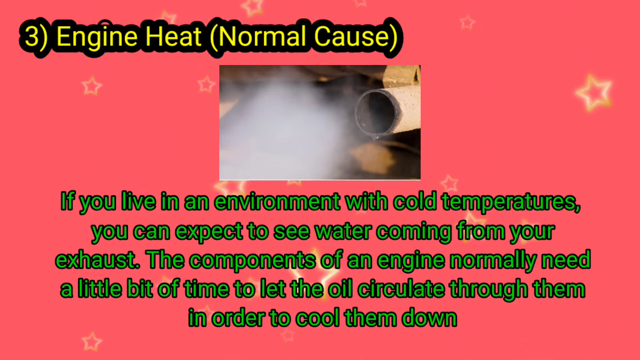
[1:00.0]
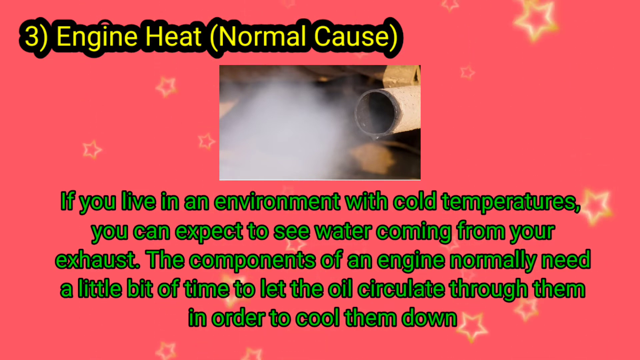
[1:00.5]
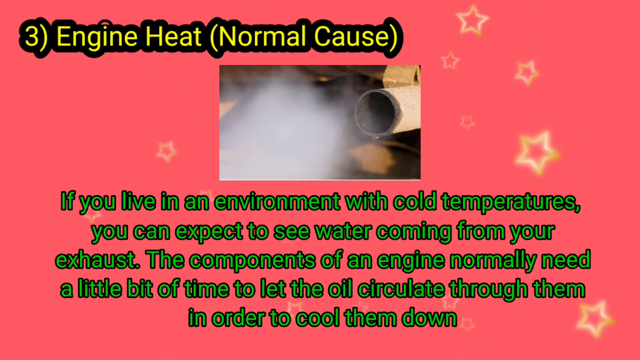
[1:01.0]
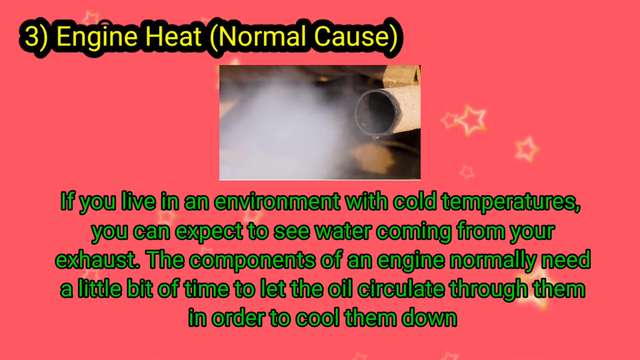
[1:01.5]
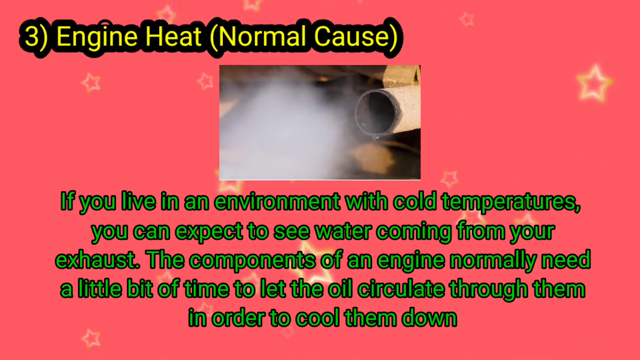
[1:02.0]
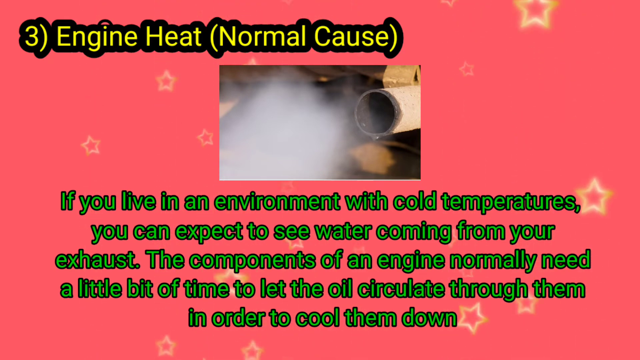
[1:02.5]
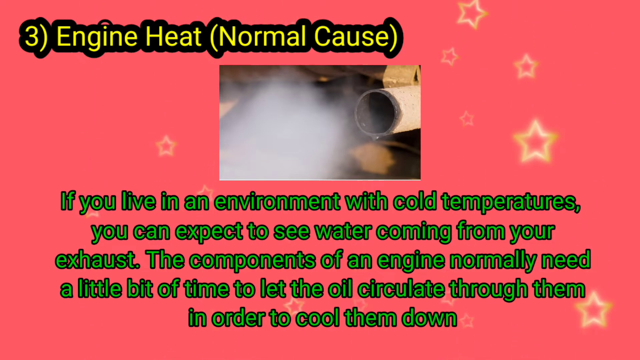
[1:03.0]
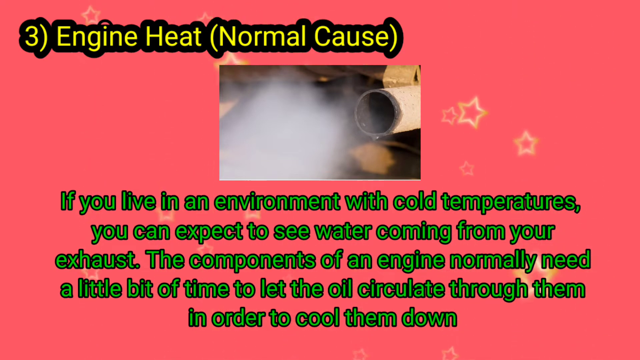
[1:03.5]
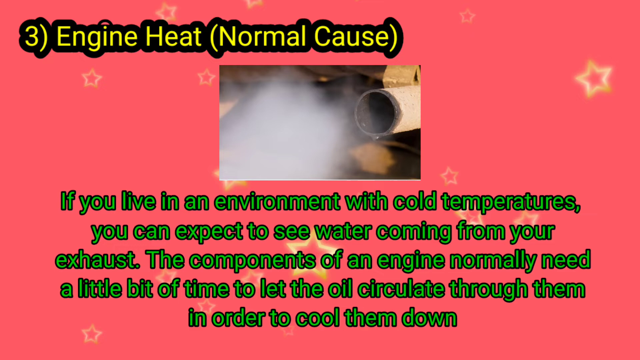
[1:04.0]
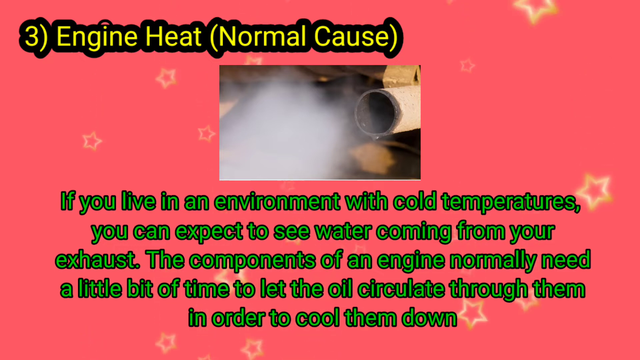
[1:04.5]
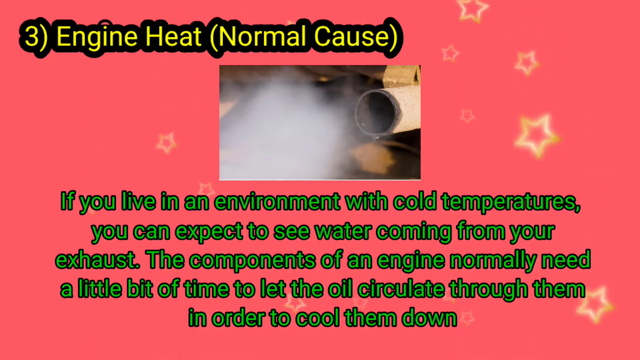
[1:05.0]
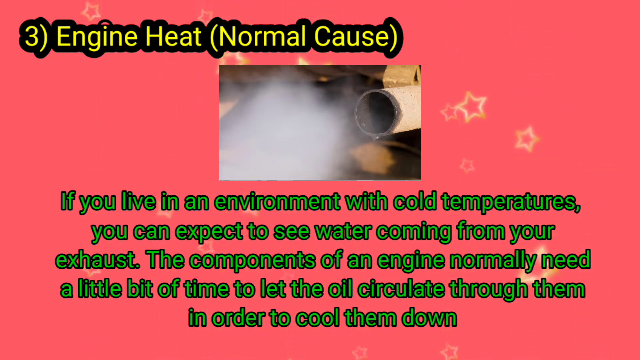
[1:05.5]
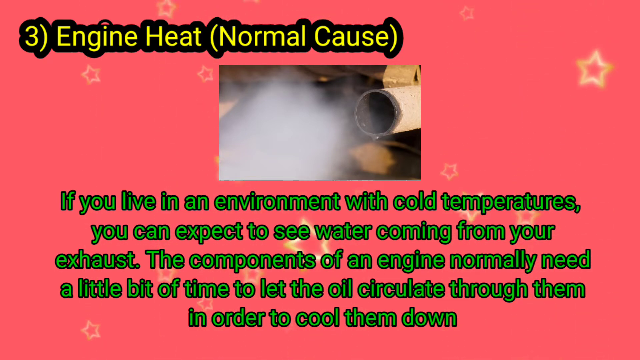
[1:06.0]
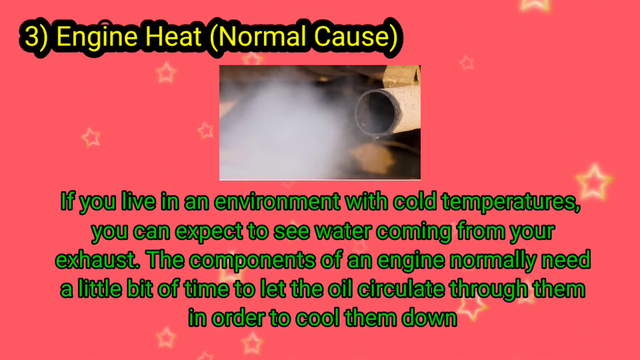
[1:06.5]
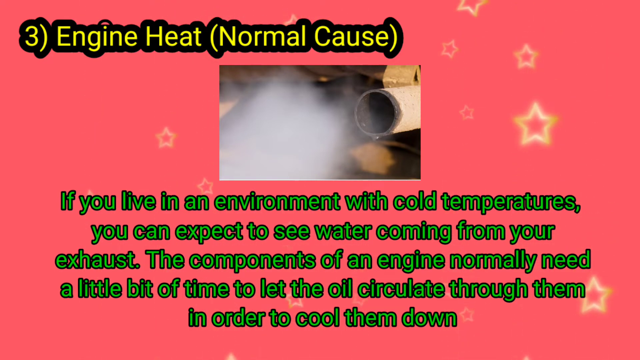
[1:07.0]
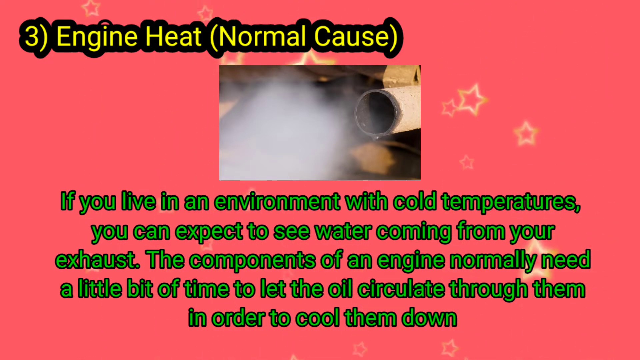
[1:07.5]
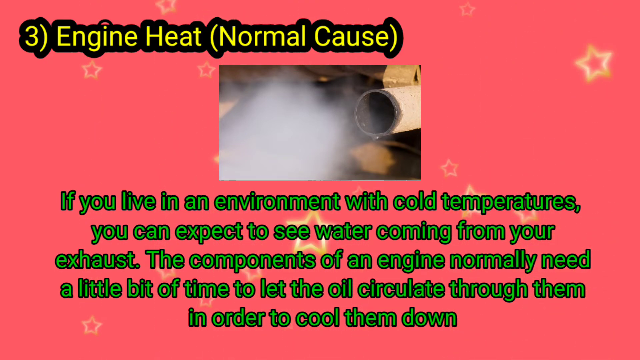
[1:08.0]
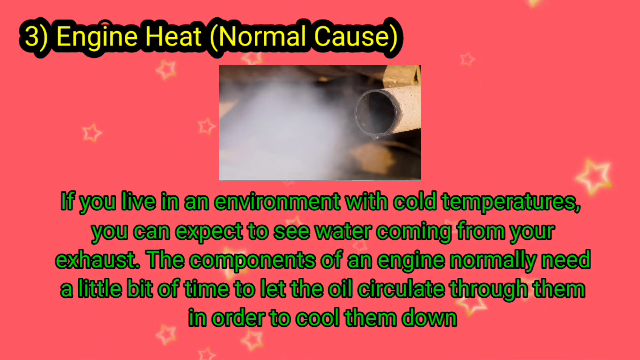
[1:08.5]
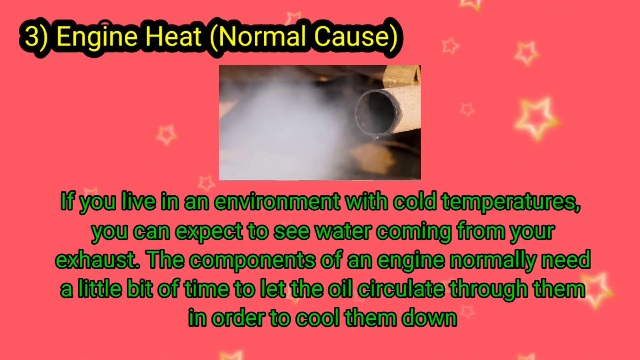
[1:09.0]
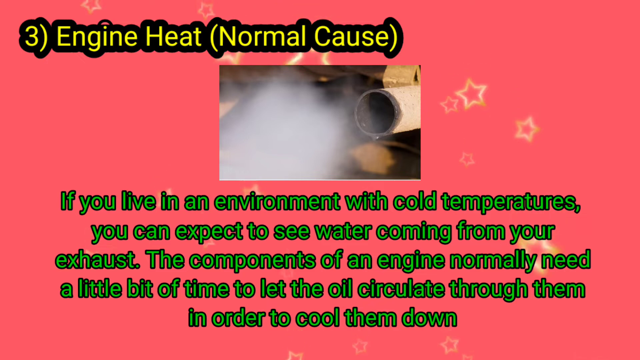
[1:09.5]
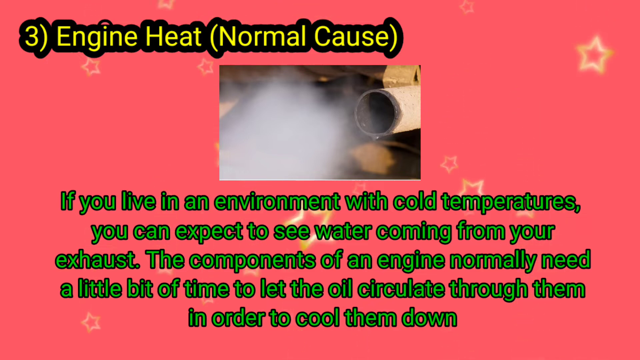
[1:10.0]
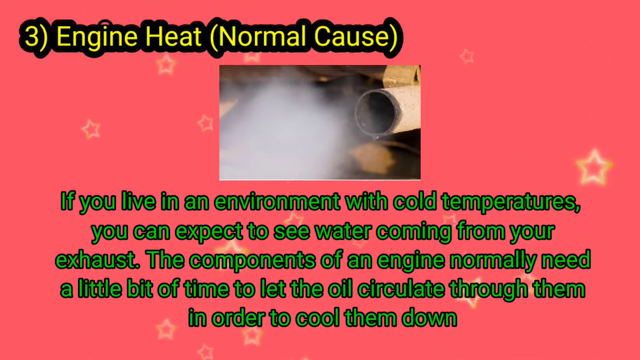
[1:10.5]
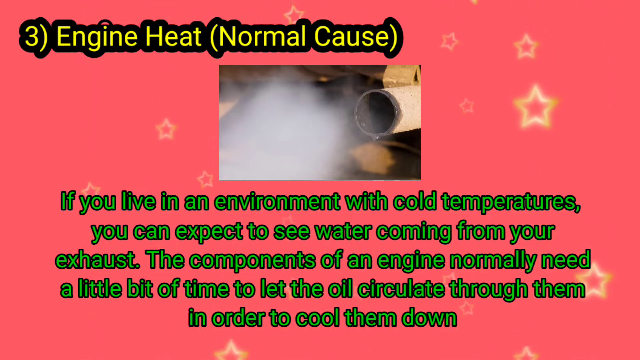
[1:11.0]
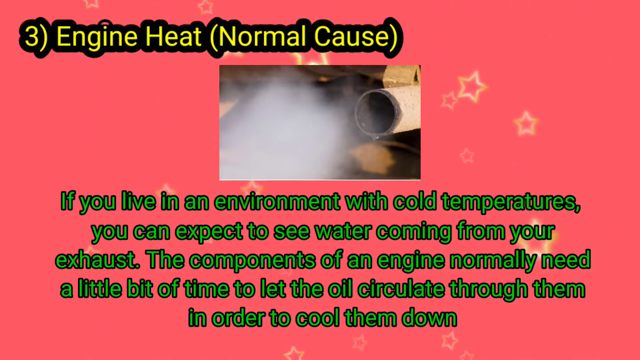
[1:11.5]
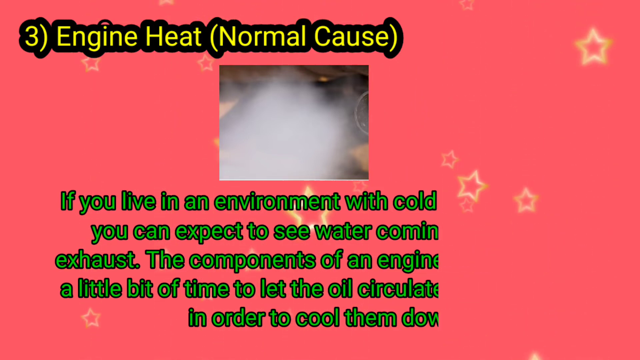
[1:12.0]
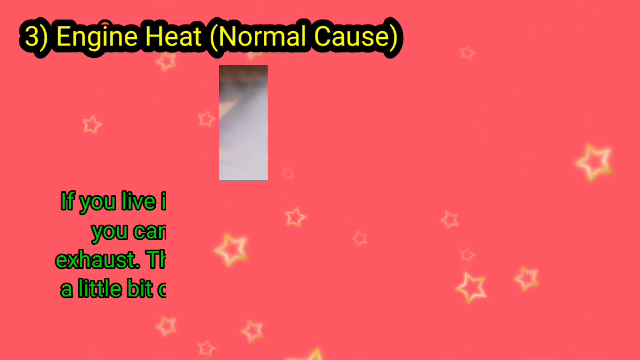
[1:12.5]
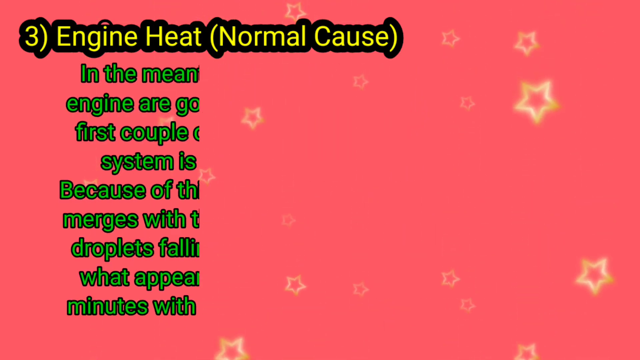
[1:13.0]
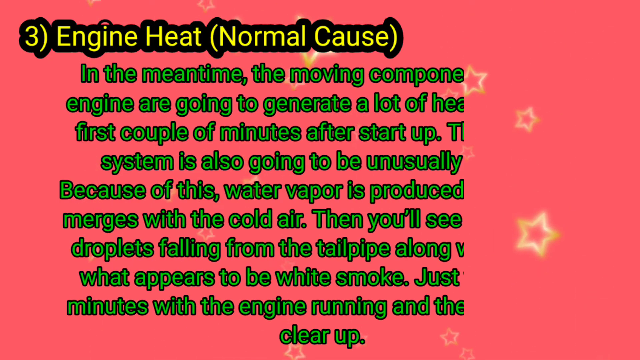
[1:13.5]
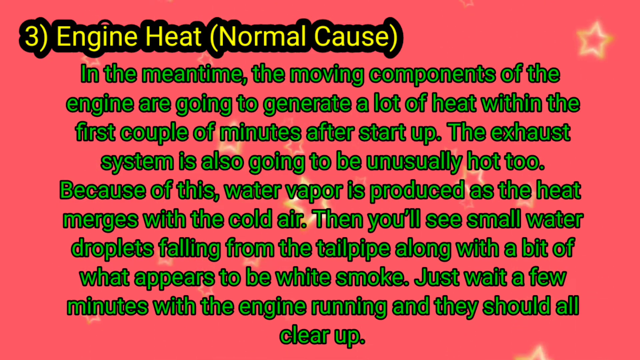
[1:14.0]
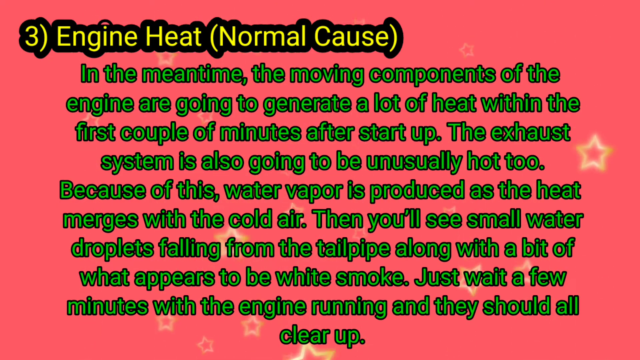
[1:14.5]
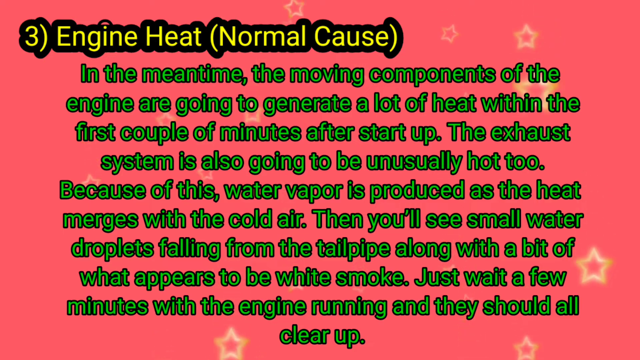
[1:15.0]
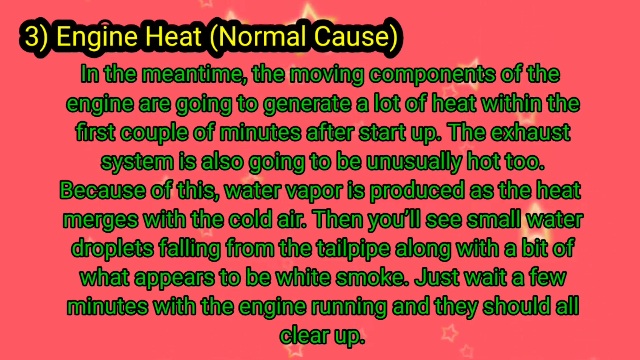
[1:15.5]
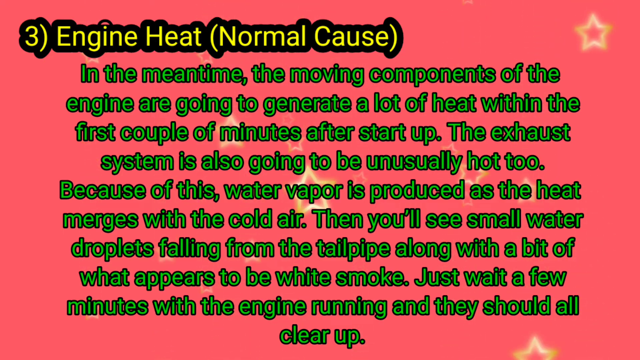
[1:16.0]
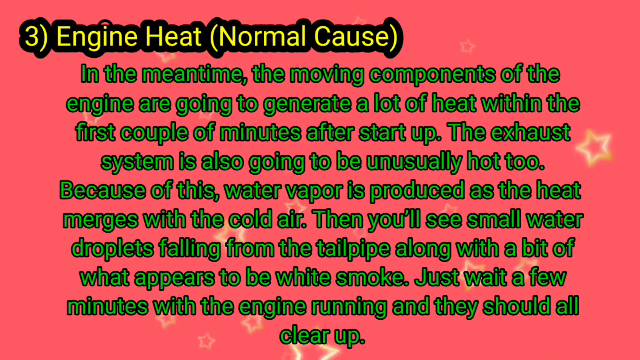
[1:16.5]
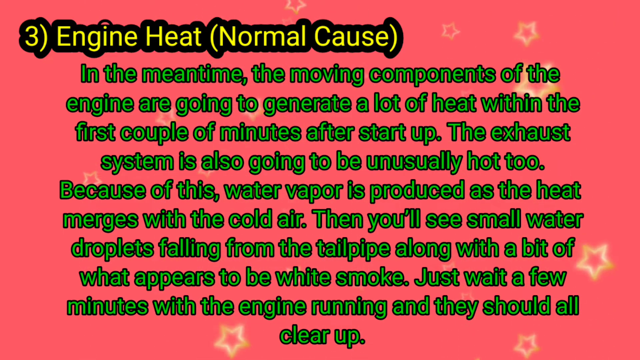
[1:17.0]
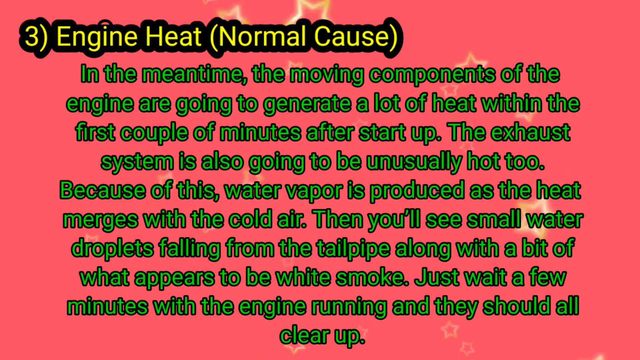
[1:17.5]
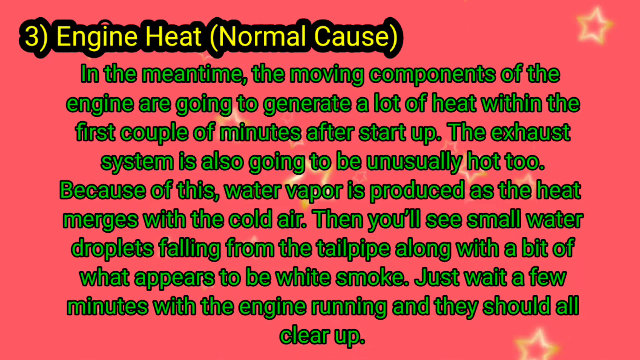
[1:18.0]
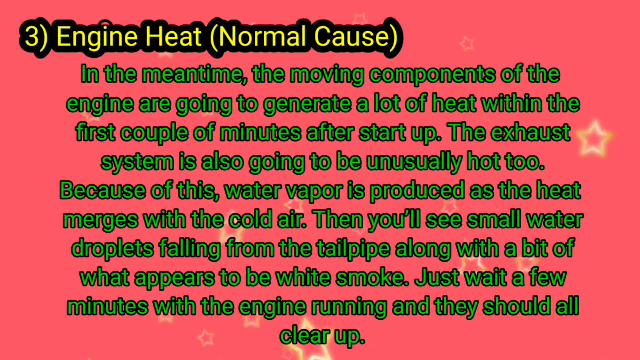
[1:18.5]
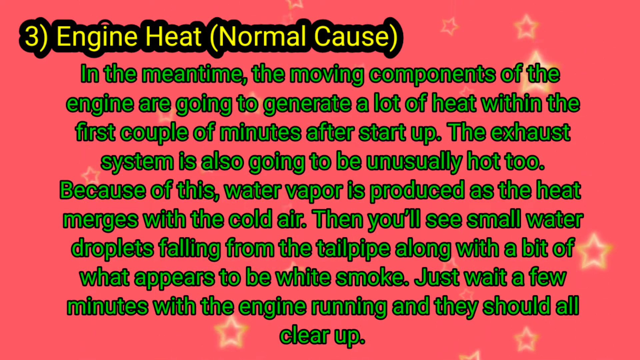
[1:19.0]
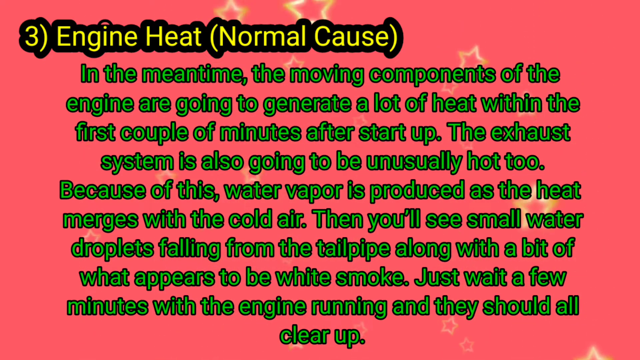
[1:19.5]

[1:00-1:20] Yellow lettering at the top reads "three engine heat normal cause". The photograph in the top center shows a beige tailpipe on the right side and light grayish smoke in the center. Green lettering below reads "if you live in an environment with cold temperatures, you can expect to see water coming from your exhaust. The components of an engine normally need a little bit of time to let the oil circulate through them in order to cool them down." Yellow stars fall constantly. The lettering changes, and new green text reads "in the meantime, the moving components of the engine are going to generate a lot of heat within the first couple of minutes after startup. The exhaust system also is going to be unusually hot too, because of this water vapors produced as the heat merges with the cold air. Then you'll see small water droplets falling from the tailpipe along with a bit of what appears to be white smoke. Just wait a few minutes with the engine running and they should all clear up."